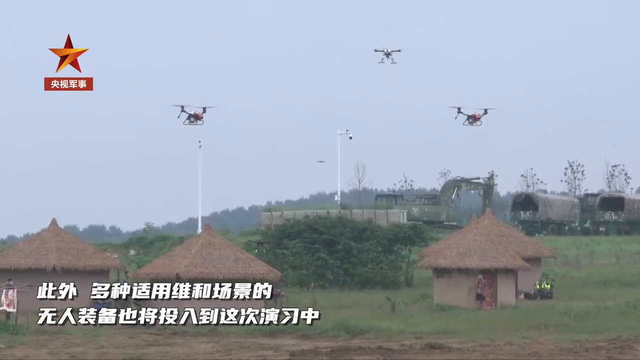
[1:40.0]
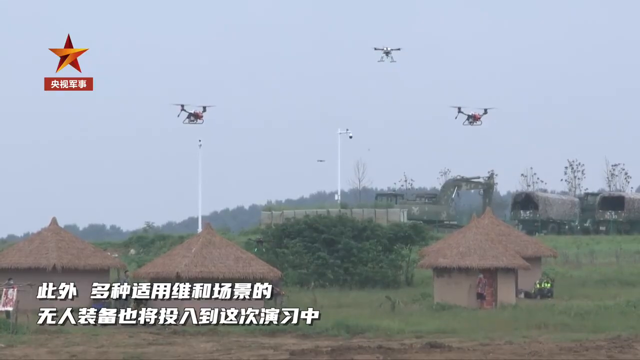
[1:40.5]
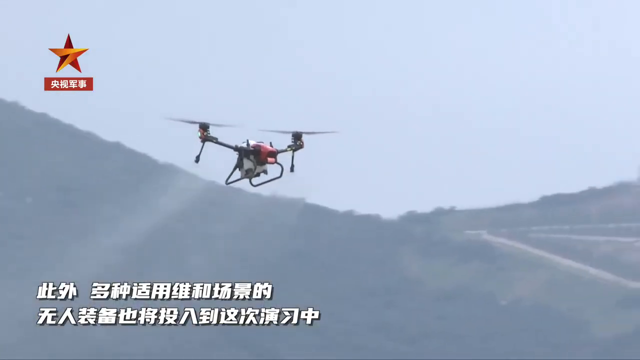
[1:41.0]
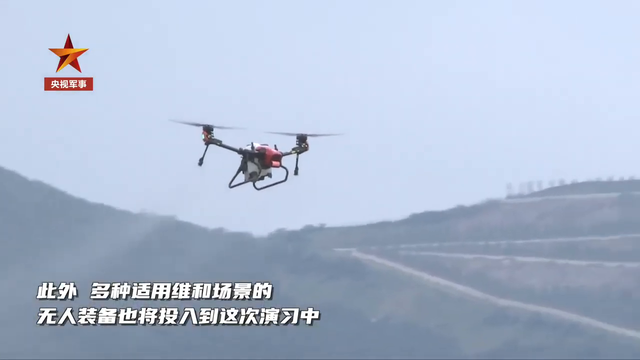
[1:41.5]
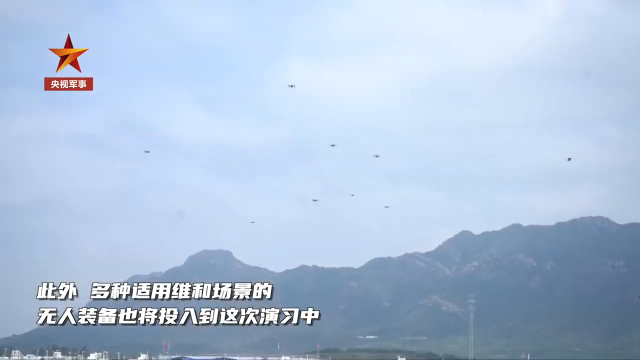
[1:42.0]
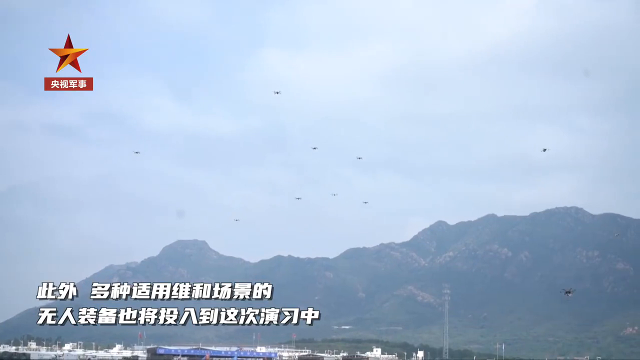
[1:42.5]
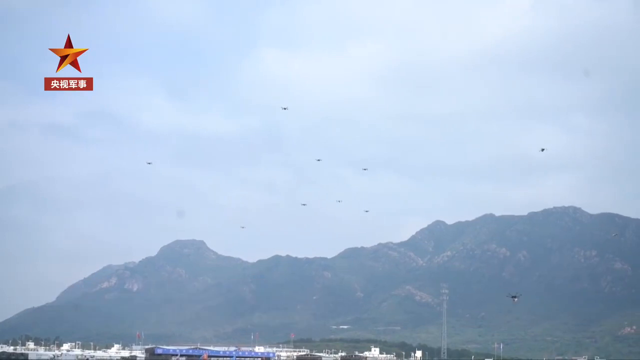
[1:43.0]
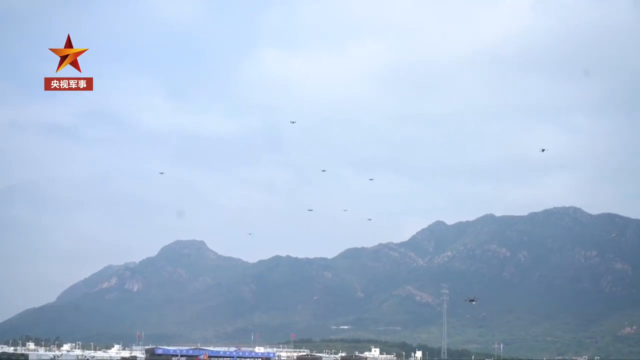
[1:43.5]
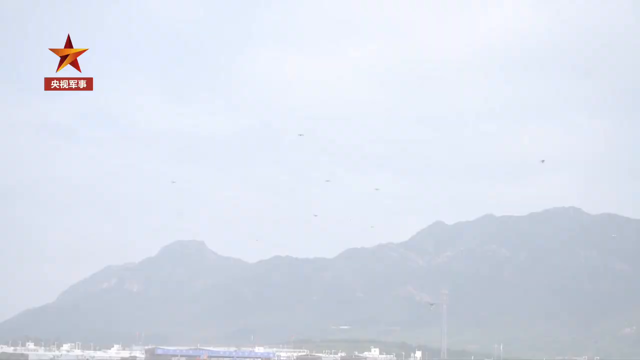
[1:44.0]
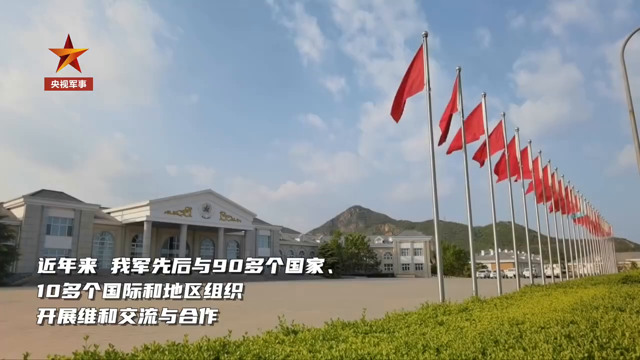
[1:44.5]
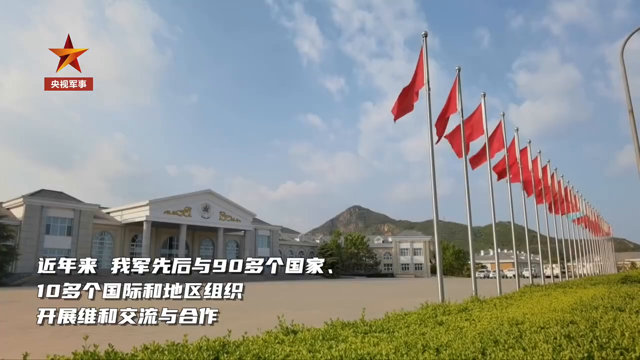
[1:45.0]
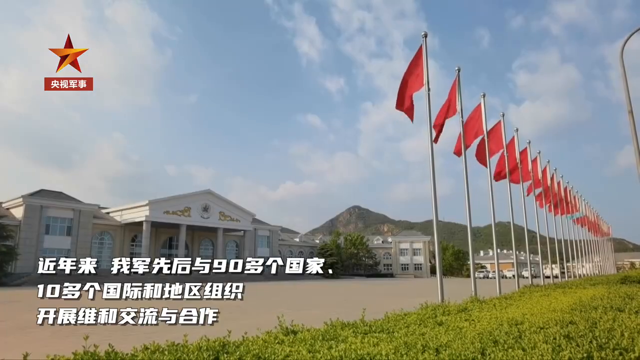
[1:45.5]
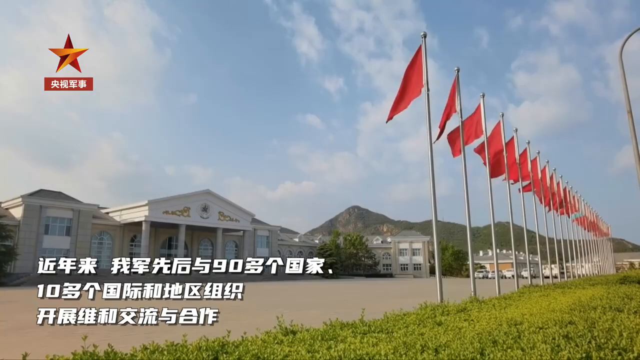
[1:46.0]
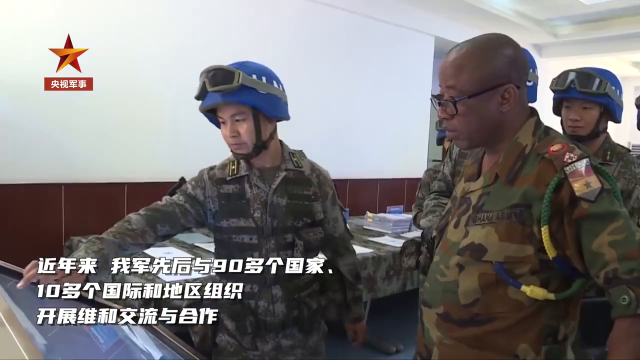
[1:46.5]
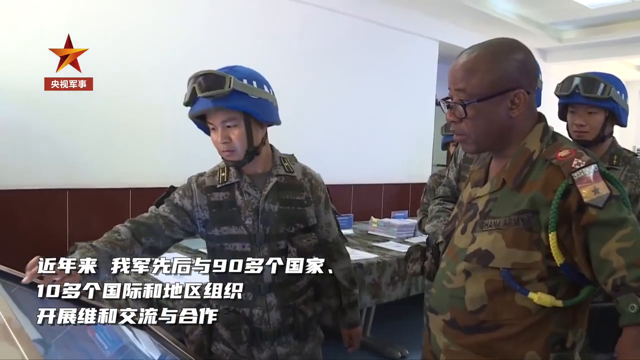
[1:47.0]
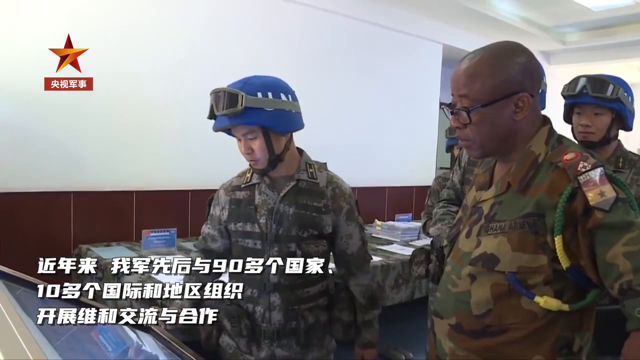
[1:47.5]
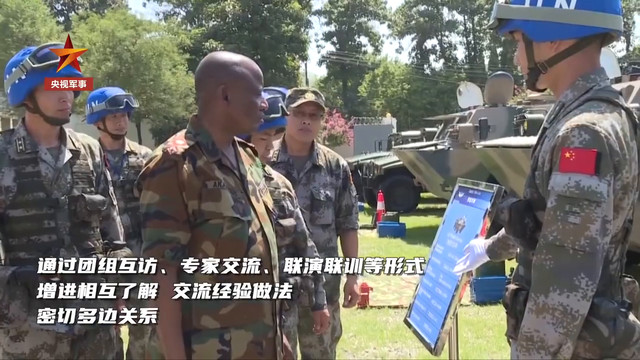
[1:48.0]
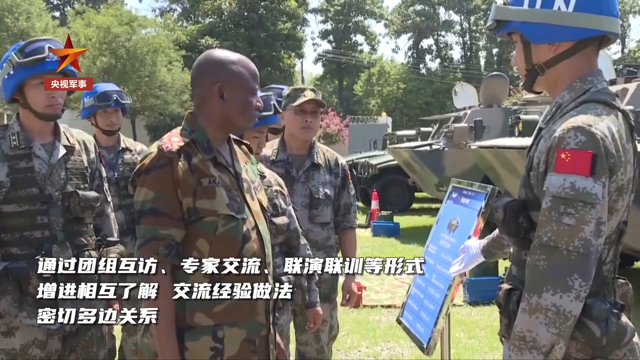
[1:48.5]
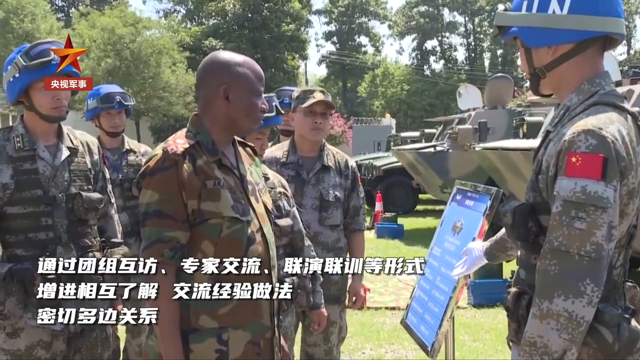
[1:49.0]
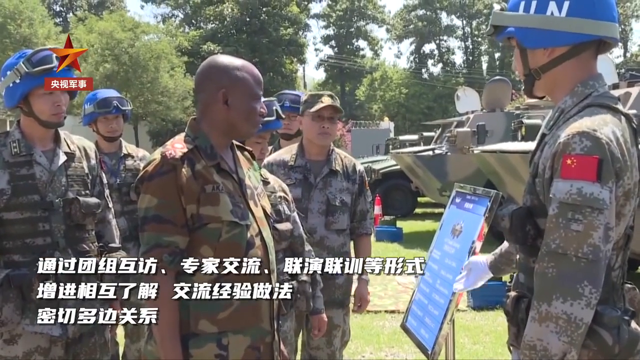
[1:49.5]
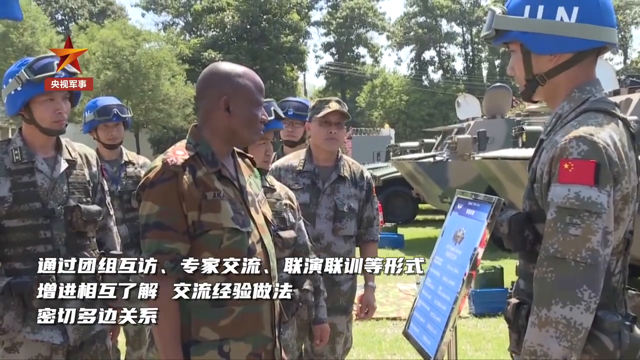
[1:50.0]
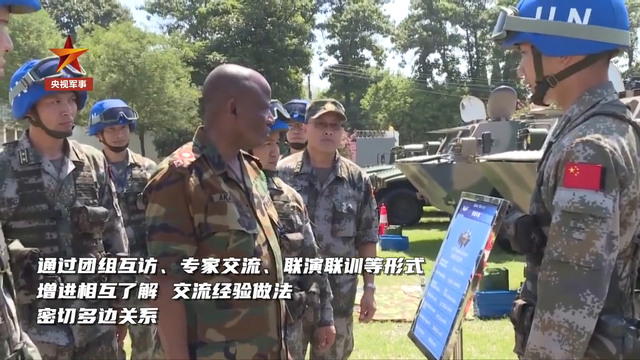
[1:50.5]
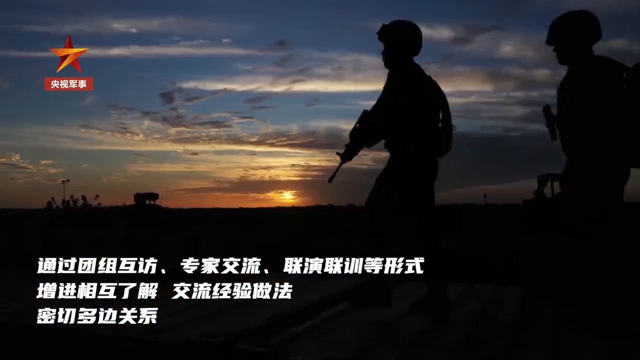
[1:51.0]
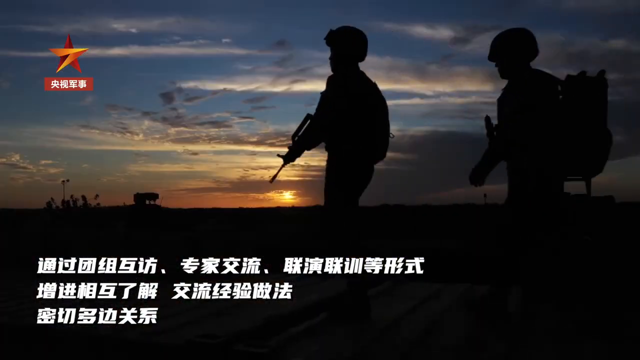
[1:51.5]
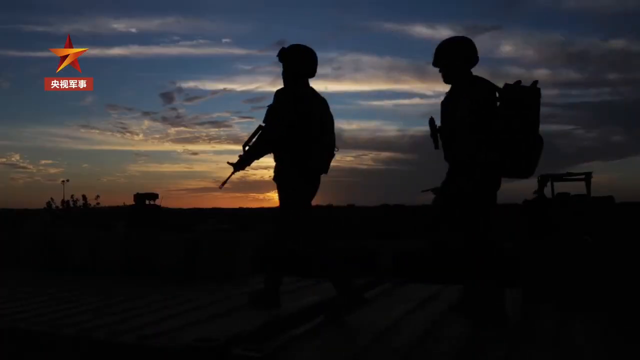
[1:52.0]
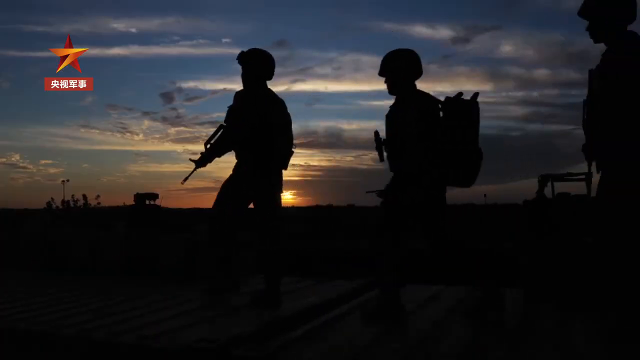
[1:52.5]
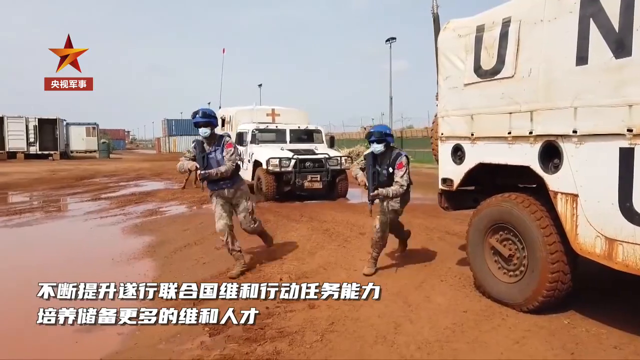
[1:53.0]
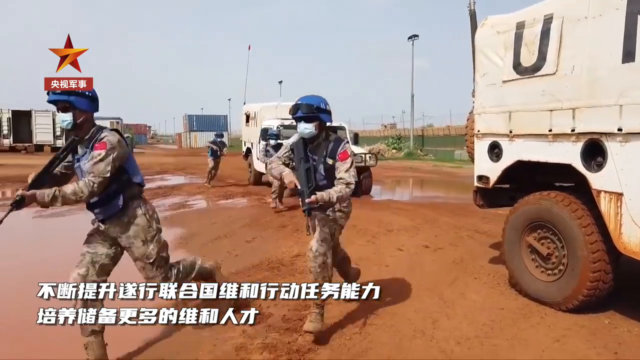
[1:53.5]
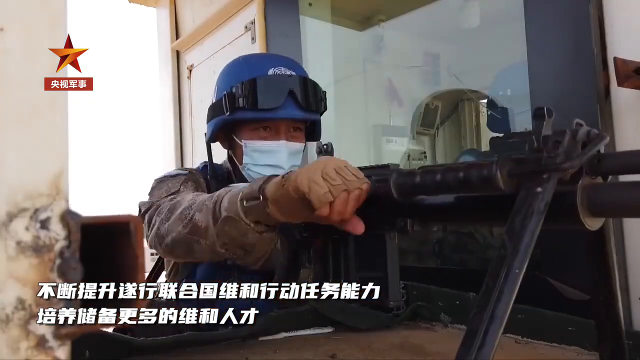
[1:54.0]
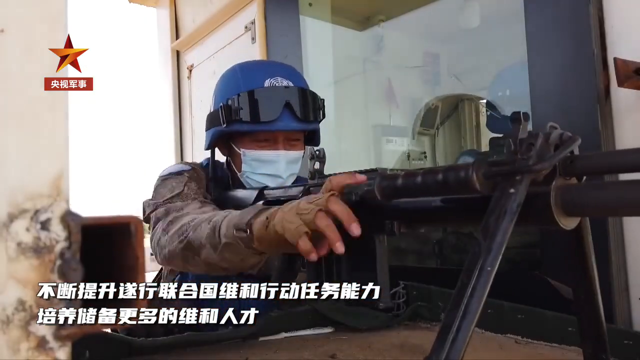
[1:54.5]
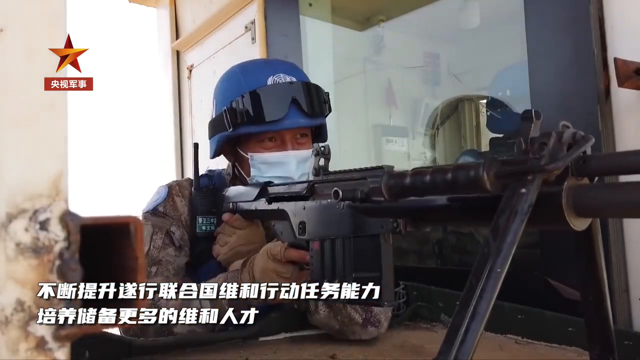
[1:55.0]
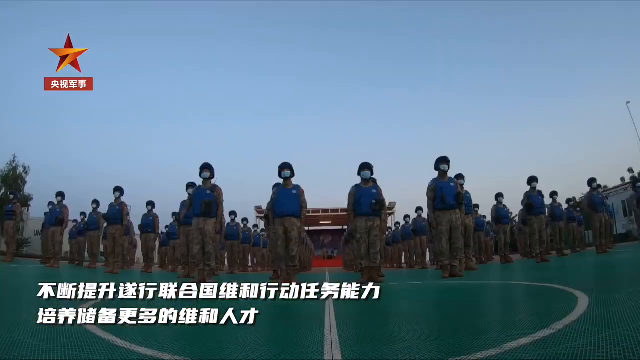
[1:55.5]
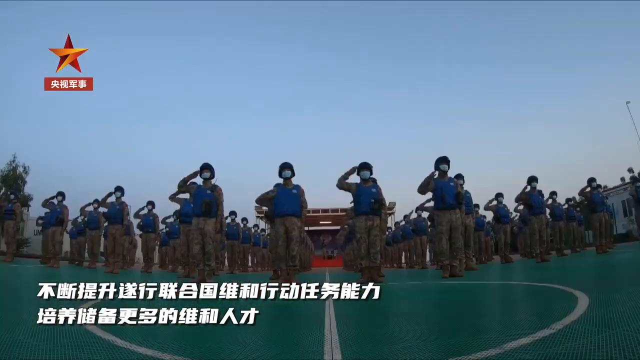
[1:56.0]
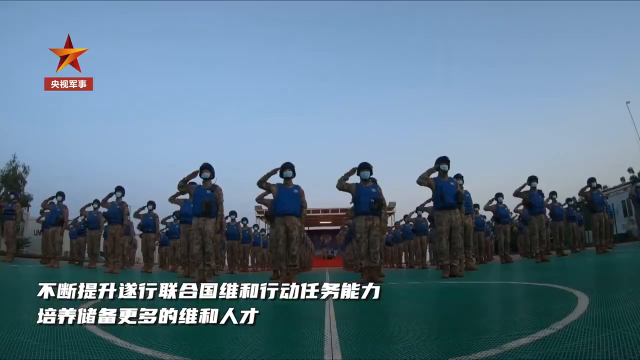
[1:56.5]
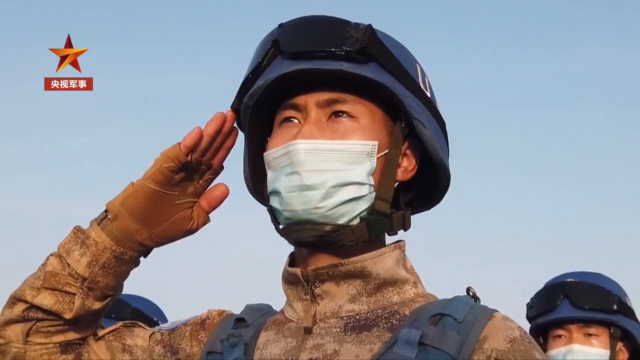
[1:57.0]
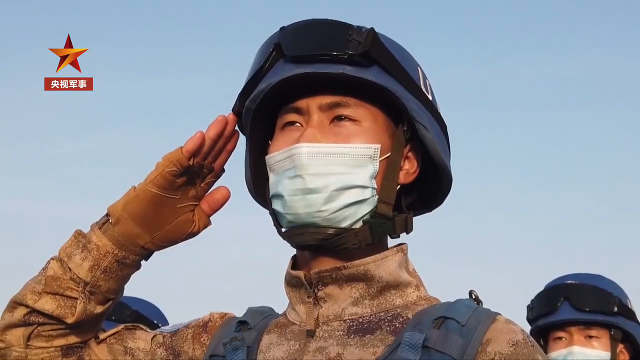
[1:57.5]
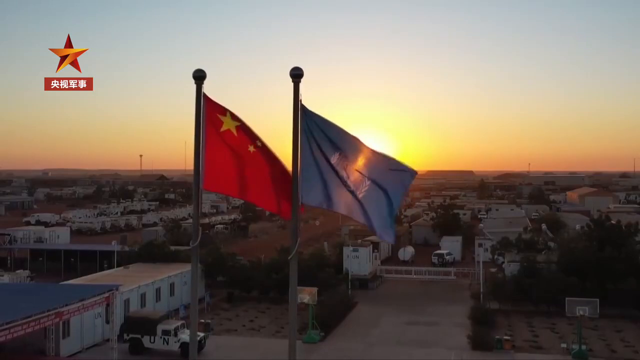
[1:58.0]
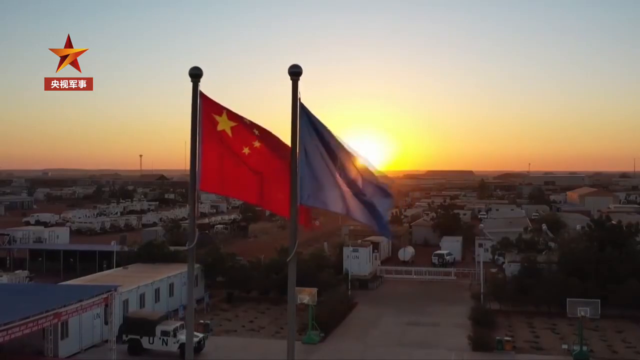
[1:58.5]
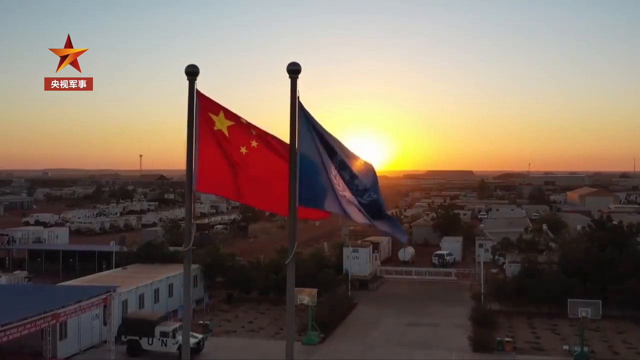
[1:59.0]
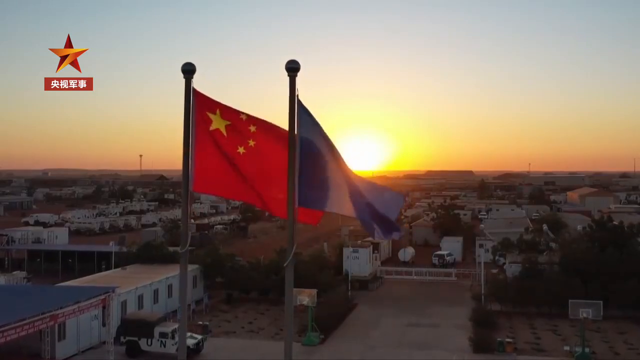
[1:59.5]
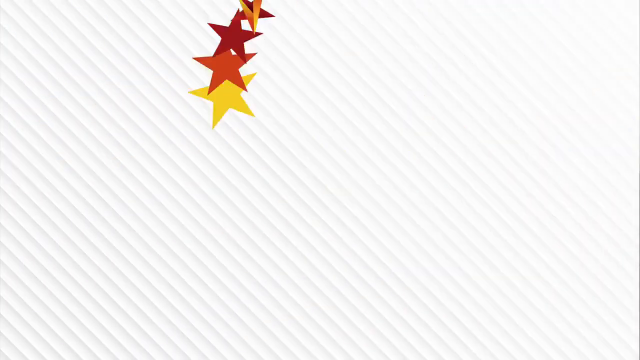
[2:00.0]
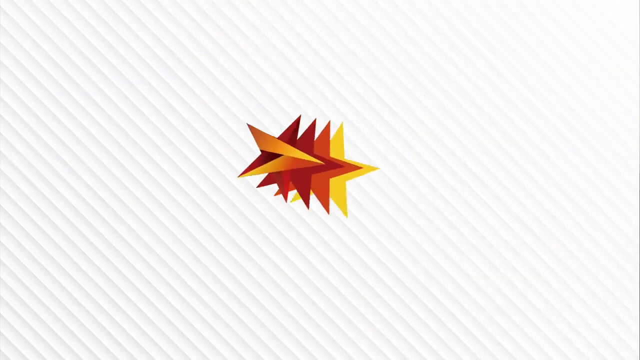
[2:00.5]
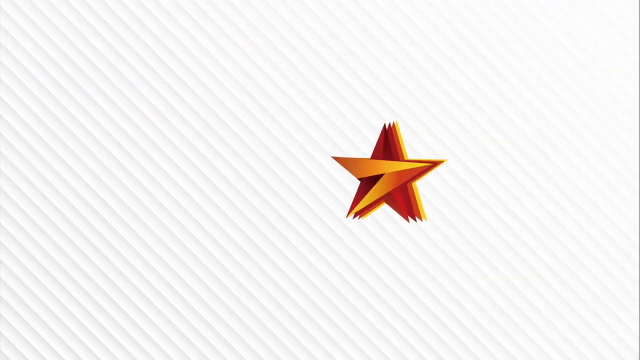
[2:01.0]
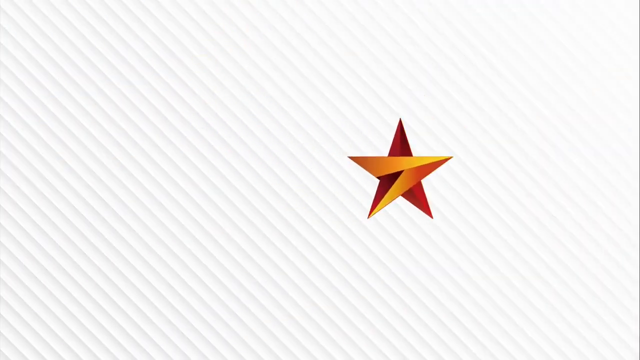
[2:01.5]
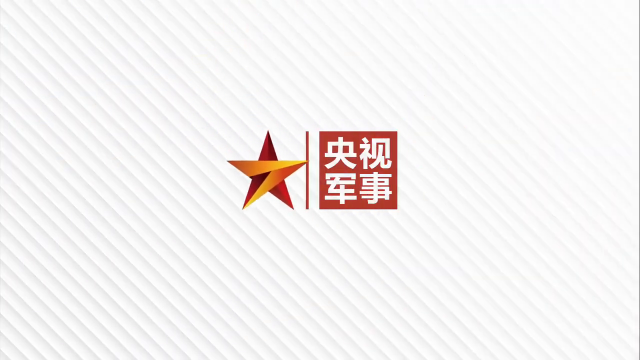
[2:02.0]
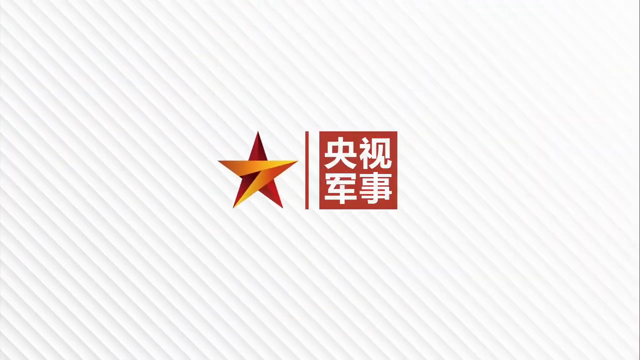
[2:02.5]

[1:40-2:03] A landscape shot shows green mountains covered in lots of trees and greenery under a fairly cloudy sky with hints of blue coming through. East Asian text runs along the bottom of the screen. Next comes what looks like a street with some quite grand houses, maybe a town hall, and a row of flags. The scene switches to the inside of a military building, where three men are fully visible and a couple more are slightly obscured in the background. Two of them wear blue helmets with goggles on the front; the other man has no helmet but wears glasses. They are looking at something and pointing. The shot changes to an outdoor scene with tanks covered in a kind of military camouflage paint, all lined up, and some kind of information board. The same man without the helmet looks at the tanks, surrounded by UN soldiers in blue helmets; it looks like he is being given some sort of demonstration or talk about the operations at the facility. A number of men with guns run between vehicles, and a close-up shows a man loading his gun and getting ready to shoot. In the final shot, military men stand in perfect straight lines and all salute at the same time, followed by a line of flags, and then the closing logo zooms in for the end of the program.